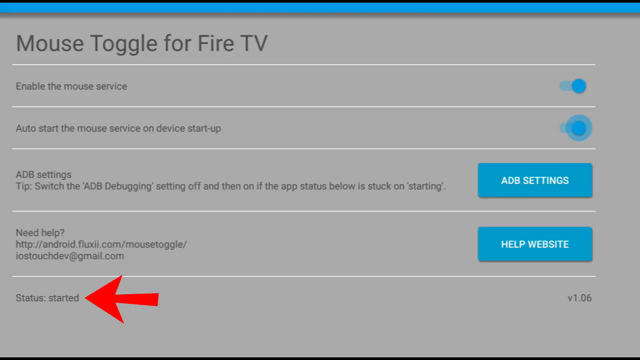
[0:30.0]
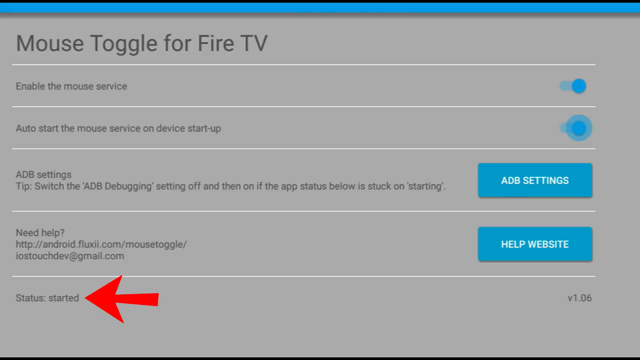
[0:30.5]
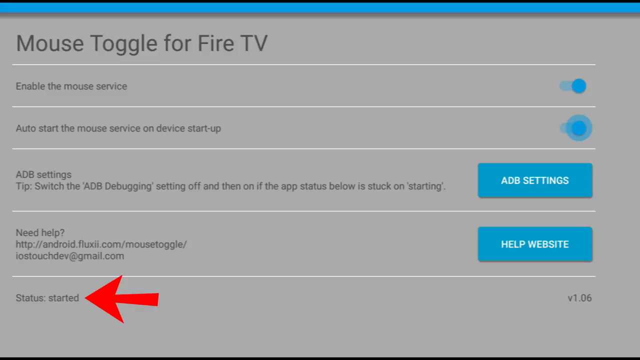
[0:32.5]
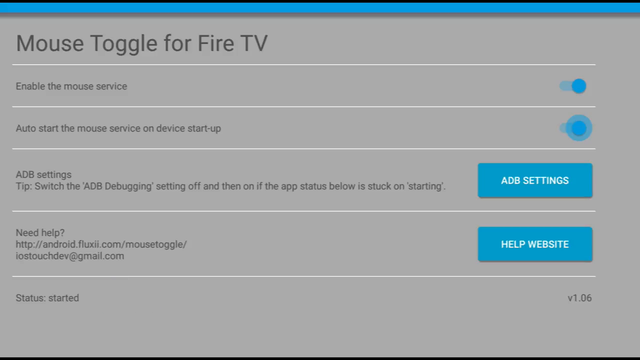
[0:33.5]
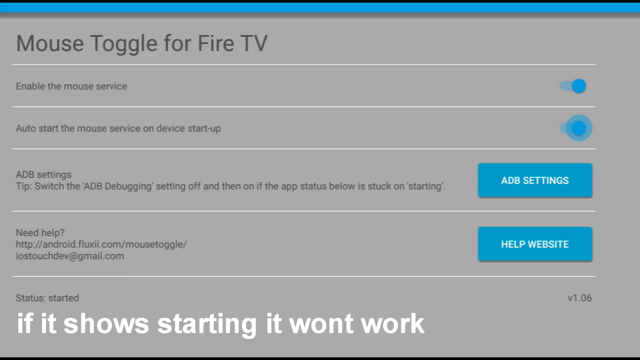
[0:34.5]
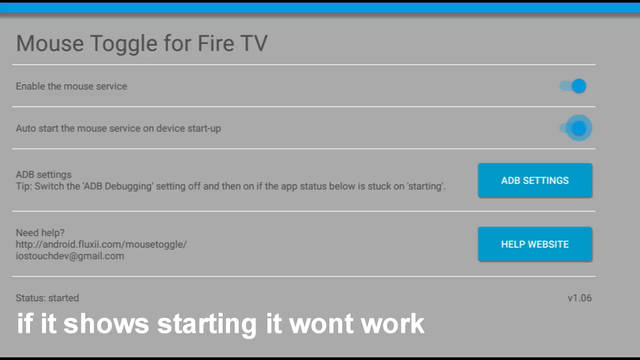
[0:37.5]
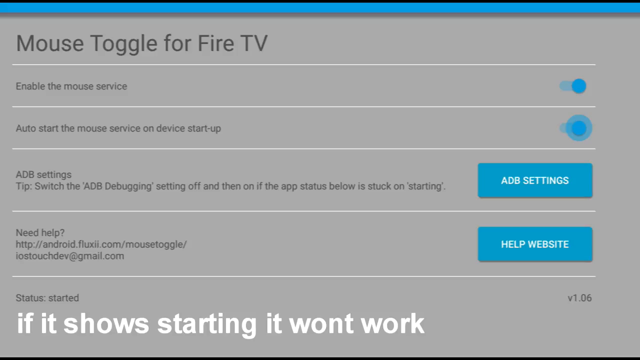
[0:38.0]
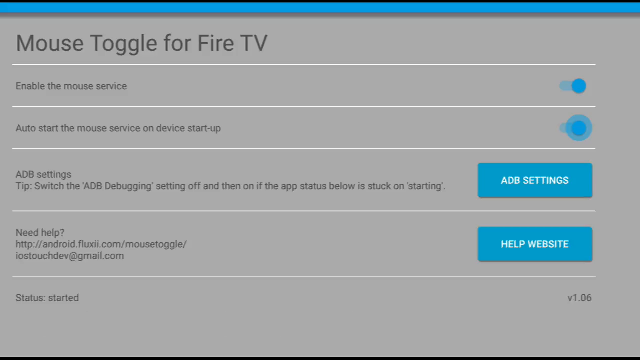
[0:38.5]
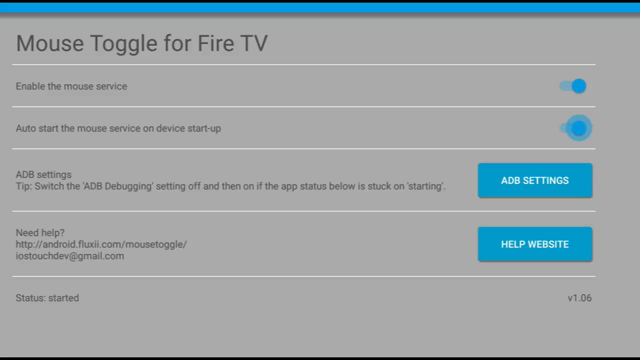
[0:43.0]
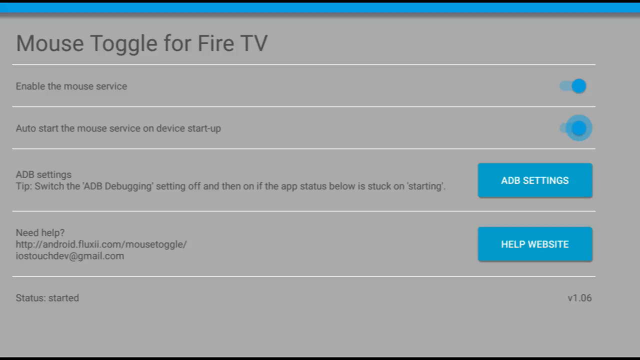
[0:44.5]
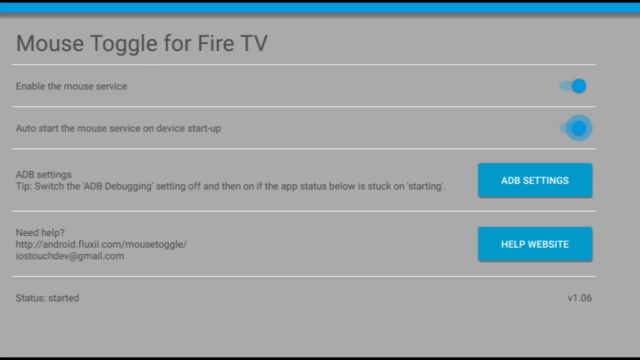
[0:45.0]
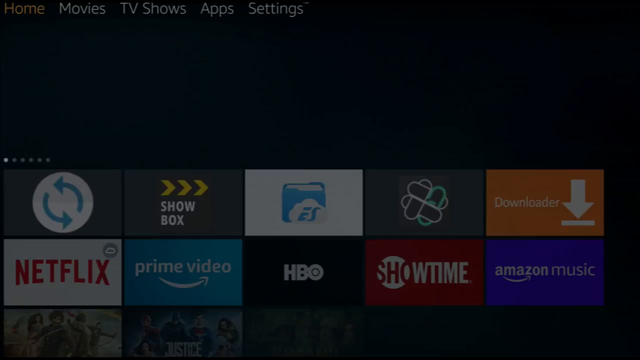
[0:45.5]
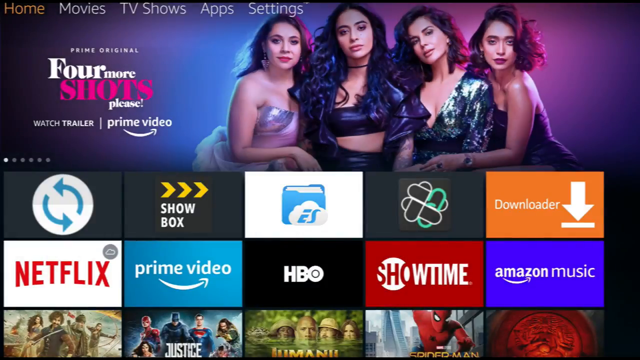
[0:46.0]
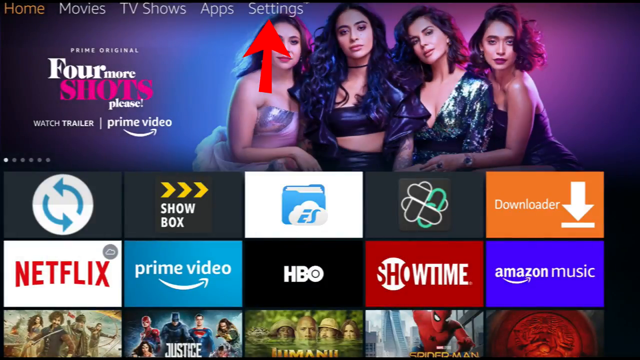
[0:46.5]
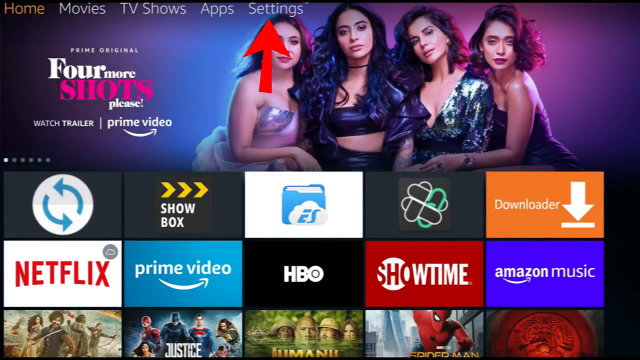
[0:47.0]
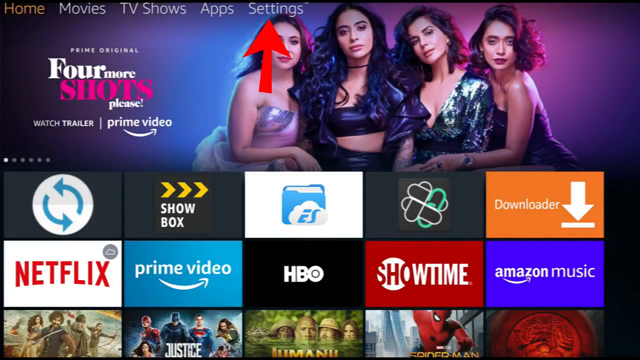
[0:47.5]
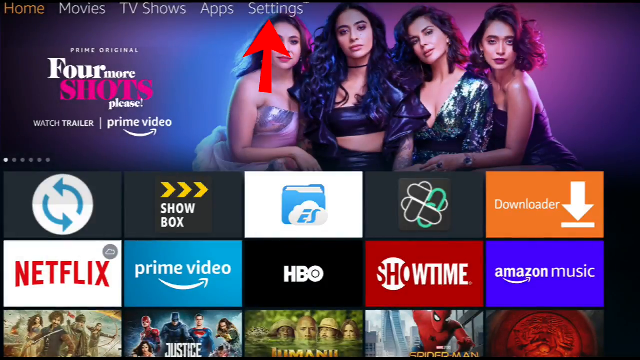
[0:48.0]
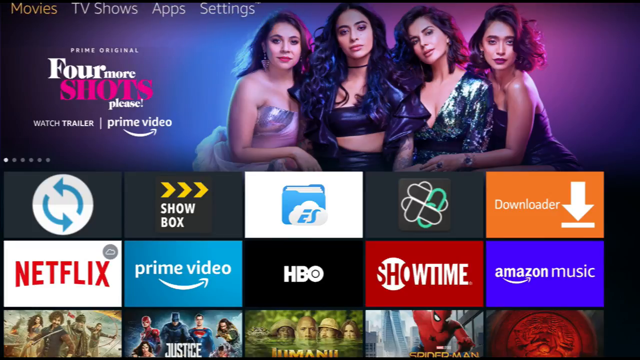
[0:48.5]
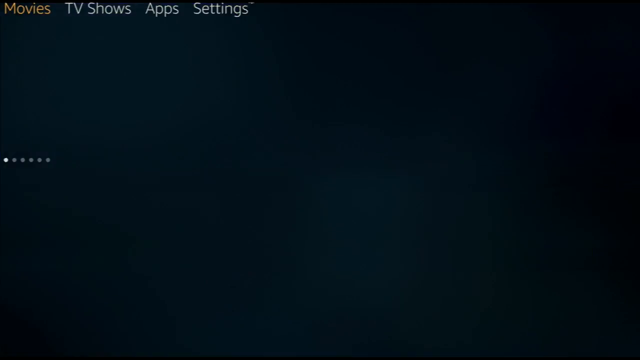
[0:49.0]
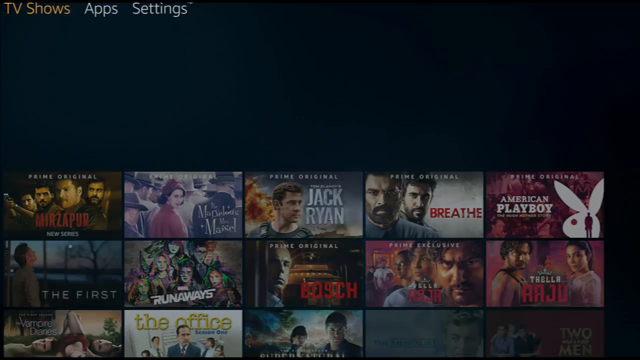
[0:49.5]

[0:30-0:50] The gray and blue settings screen with the red arrow is still shown. The red arrow disappears and white text pops up saying "if it shows starting it won't work". The white text disappears and the blue and gray screen returns. A transition leads to the Fire TV home screen, with all the apps and their colors along the bottom. At the top is an advertisement for a Prime original TV show, with four of the show's characters behind a bright background, along with the show's text, the Prime Video advertisement and the trailer. At the very top are icons for home, movies, TV shows, apps and settings, and an animated red arrow points out settings to be clicked. The user scrolls to the settings icon.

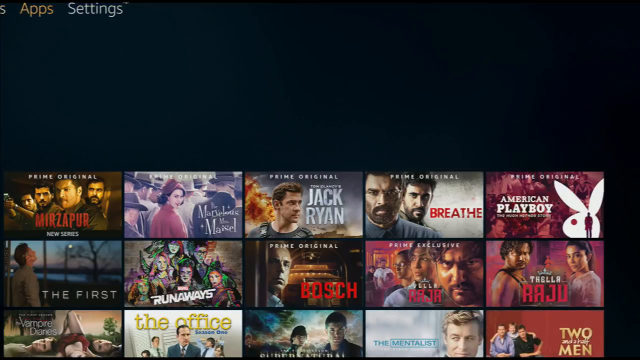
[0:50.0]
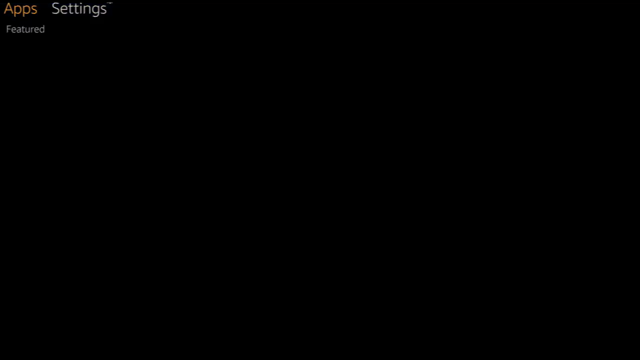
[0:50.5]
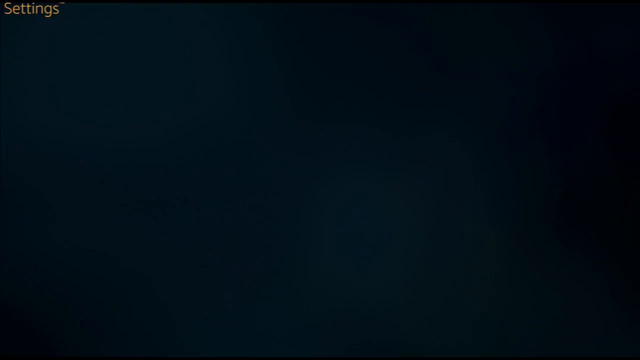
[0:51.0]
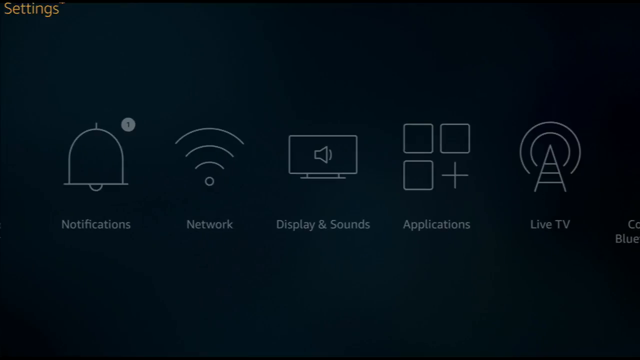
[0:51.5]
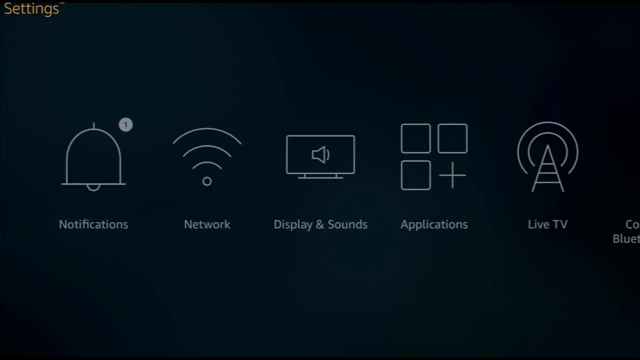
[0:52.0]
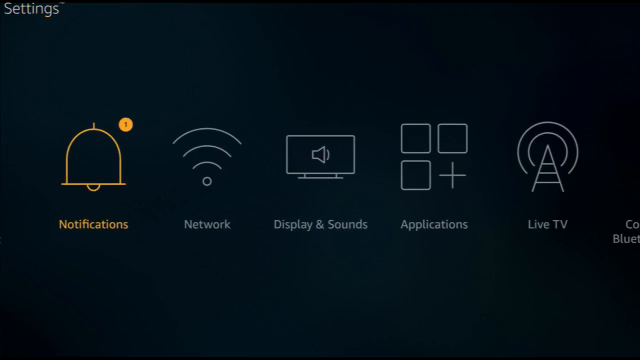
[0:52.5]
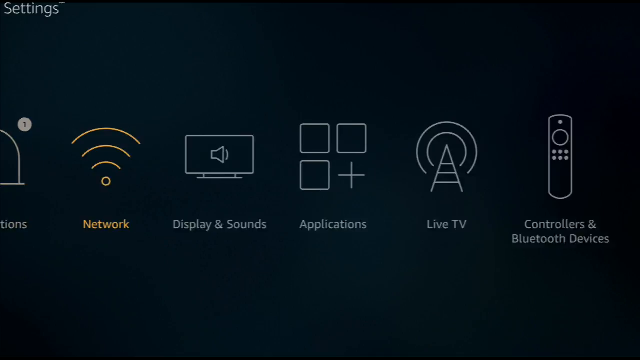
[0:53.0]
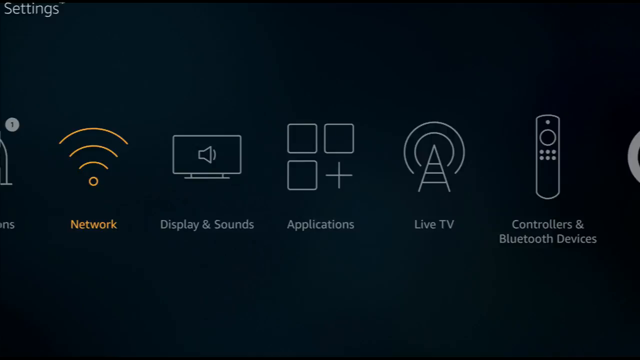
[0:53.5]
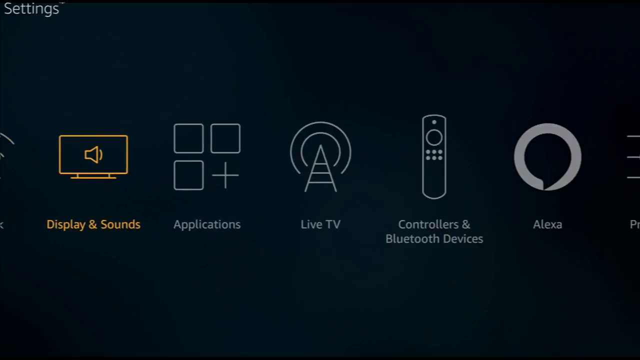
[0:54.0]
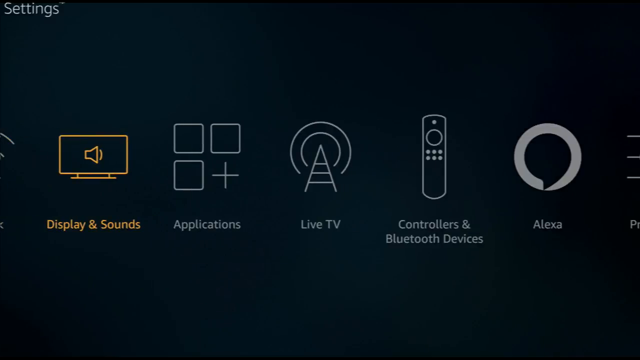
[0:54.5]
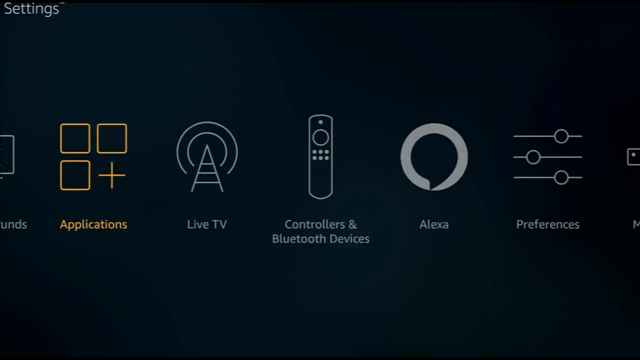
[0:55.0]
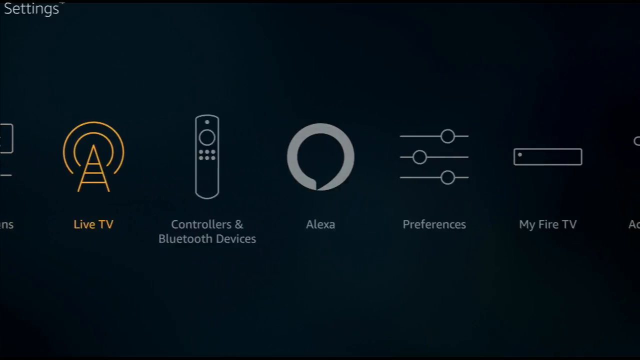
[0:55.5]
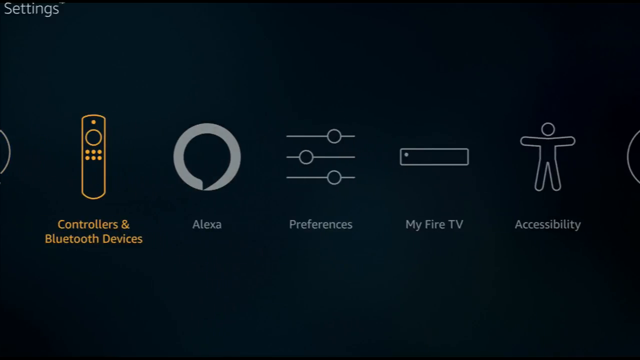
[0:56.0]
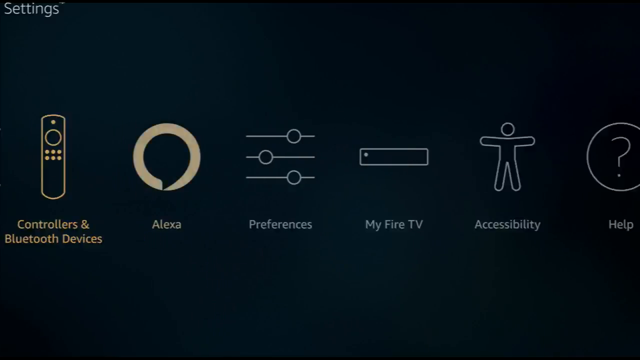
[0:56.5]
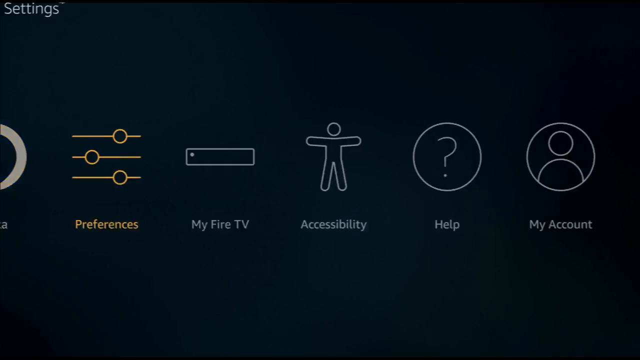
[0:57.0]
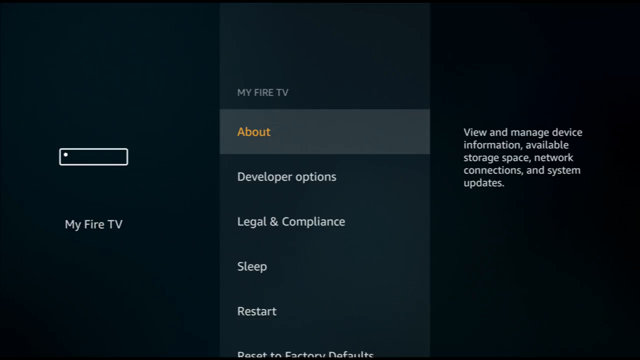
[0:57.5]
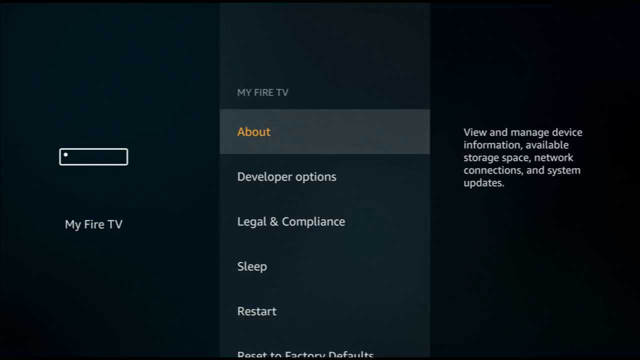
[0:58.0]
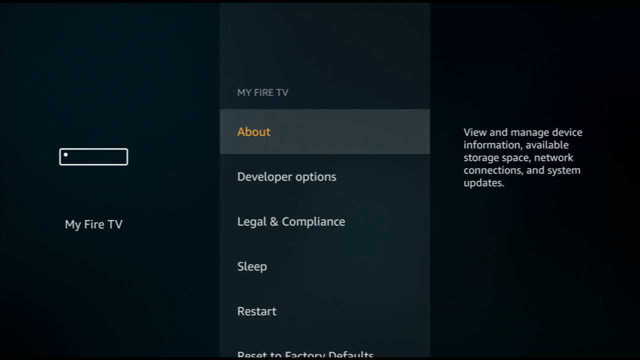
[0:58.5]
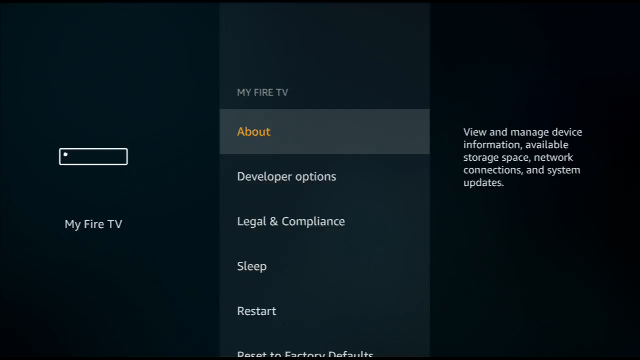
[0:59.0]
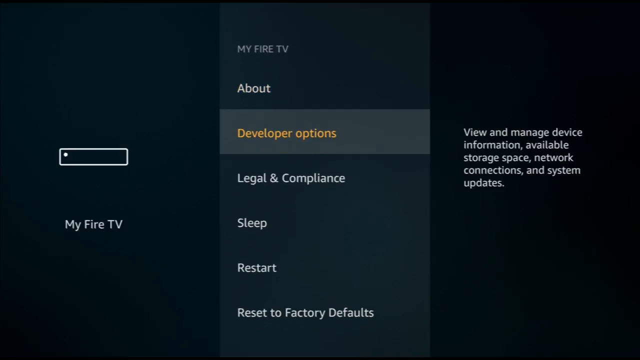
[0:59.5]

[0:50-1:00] In the settings section, a dark background holds various simplistic, modern white icons, each representing its label: notifications is a bell, network is four Wi-Fi lines, display and sound is a screen with a speaker, applications in the middle is three squares and a plus sign, My TV is an antenna with waves around it, controllers and Bluetooth devices is a remote control, Alexa is the Amazon Alexa logo, preferences is three mixer lines, and My Fire TV is a Fire TV box. The user scrolls left to right through the icons, reaches My Fire TV and selects it. A dark white text box pops up with "My Fire TV" at the very top and multiple settings that can be clicked, such as About, Developer Options, Legal and Compliance, Sleep and Restart. The user stays on the About section, scrolling through a number of entries, each with a description and information.